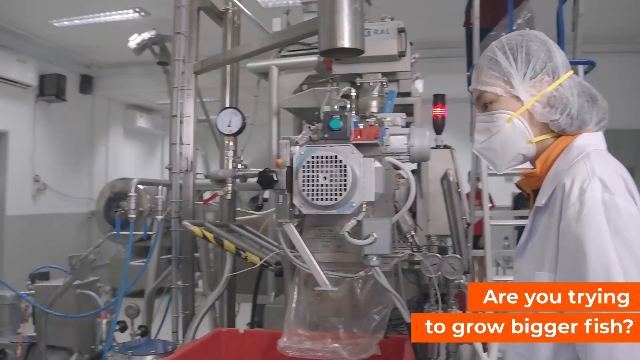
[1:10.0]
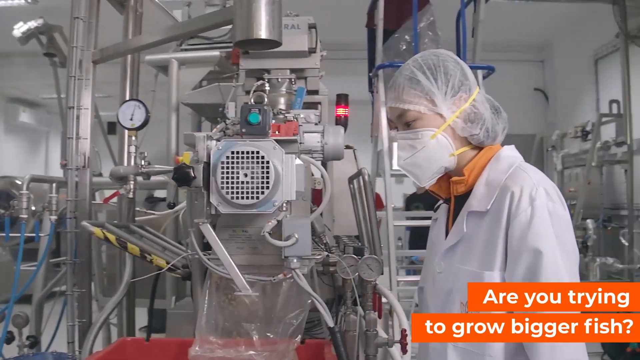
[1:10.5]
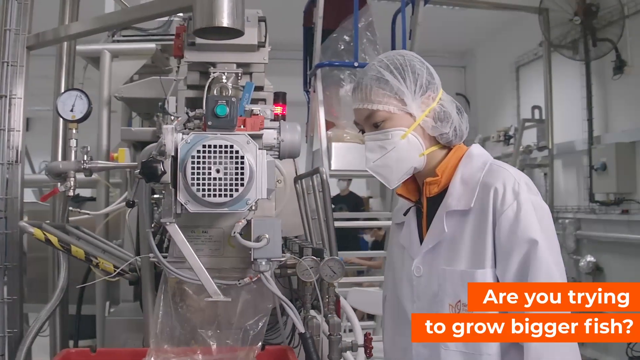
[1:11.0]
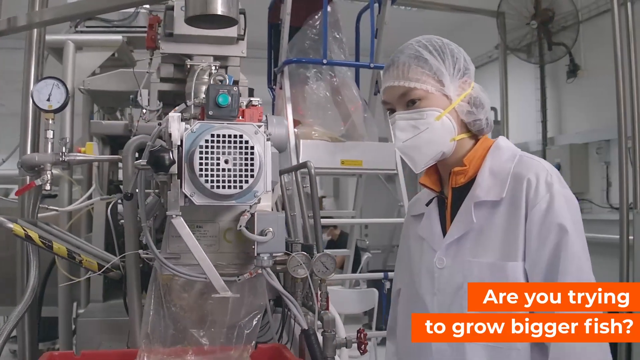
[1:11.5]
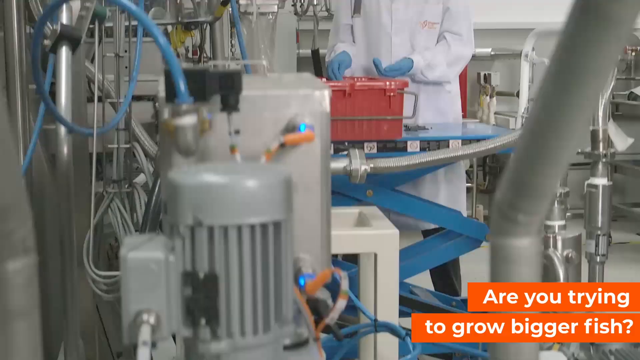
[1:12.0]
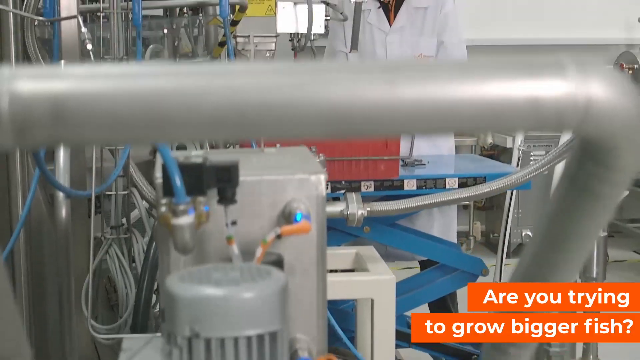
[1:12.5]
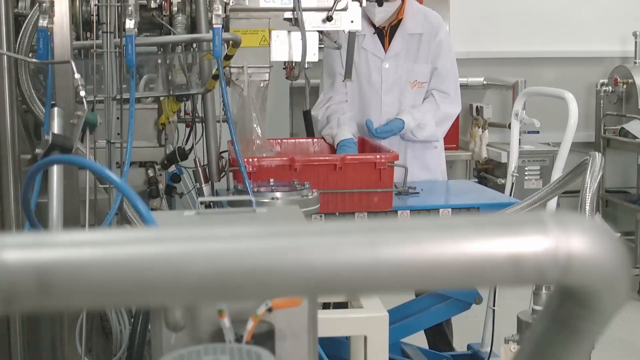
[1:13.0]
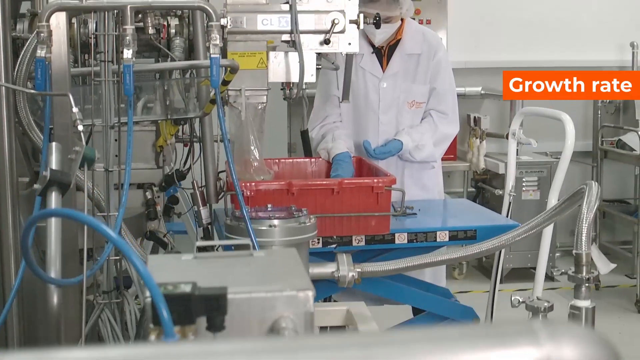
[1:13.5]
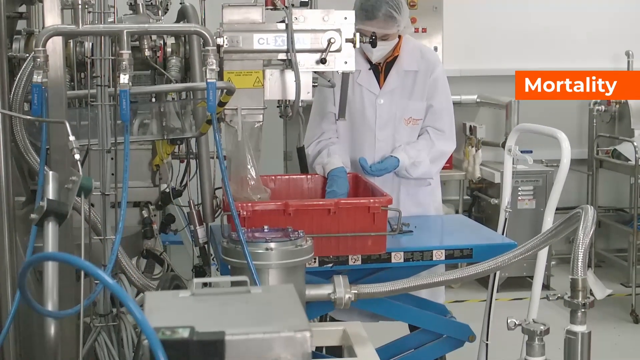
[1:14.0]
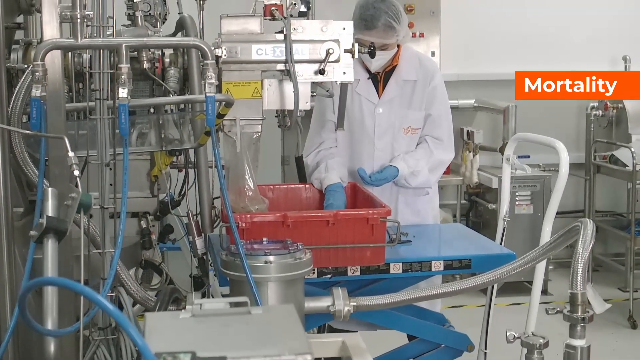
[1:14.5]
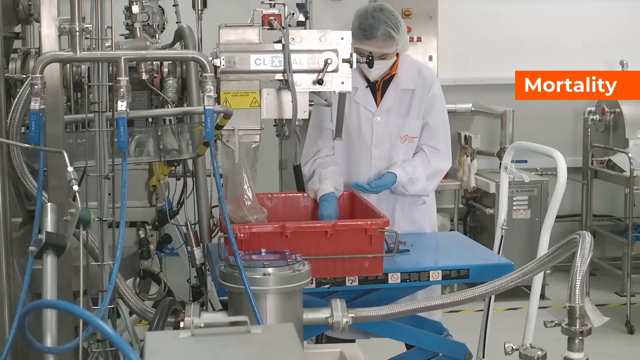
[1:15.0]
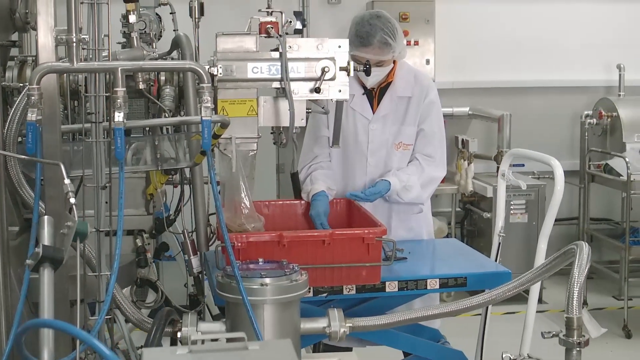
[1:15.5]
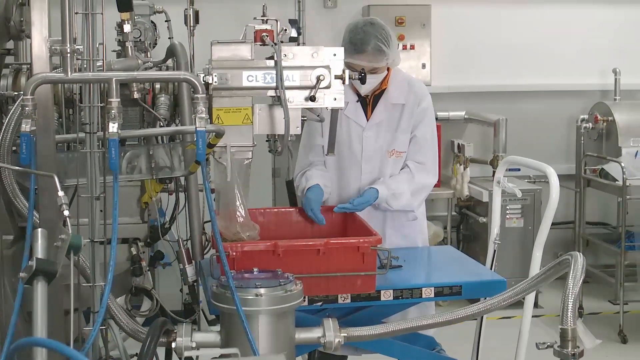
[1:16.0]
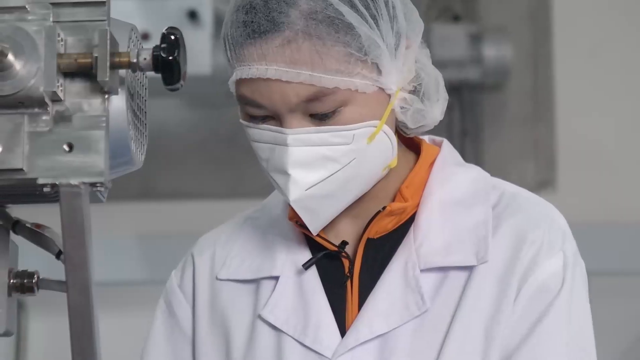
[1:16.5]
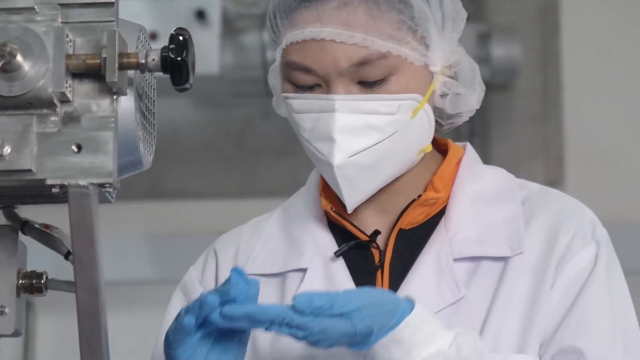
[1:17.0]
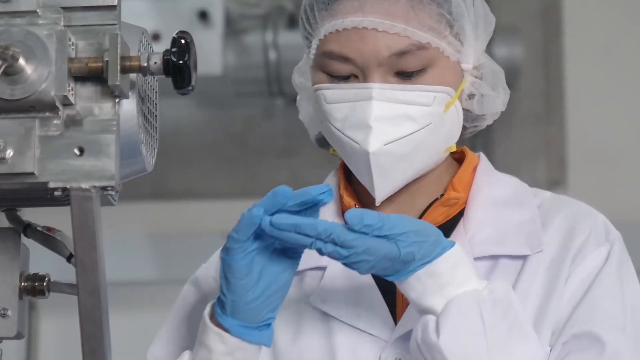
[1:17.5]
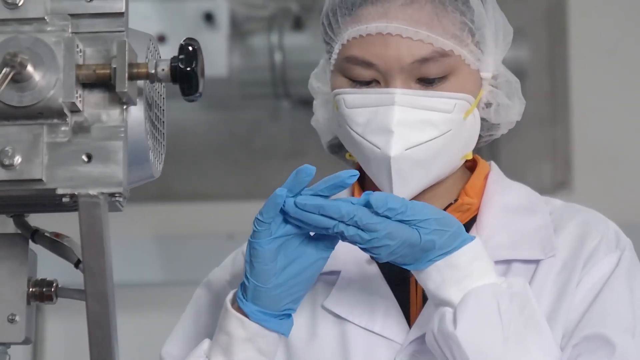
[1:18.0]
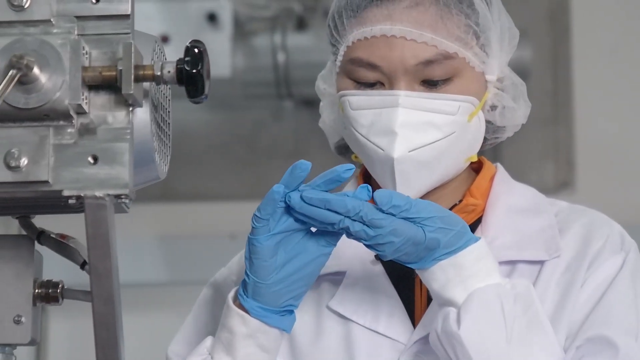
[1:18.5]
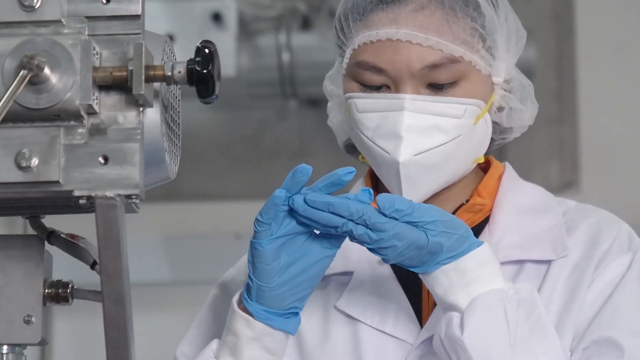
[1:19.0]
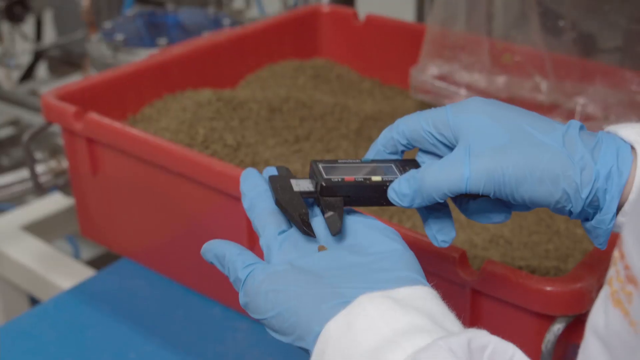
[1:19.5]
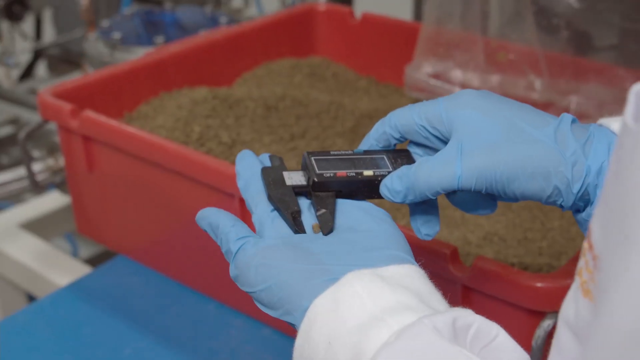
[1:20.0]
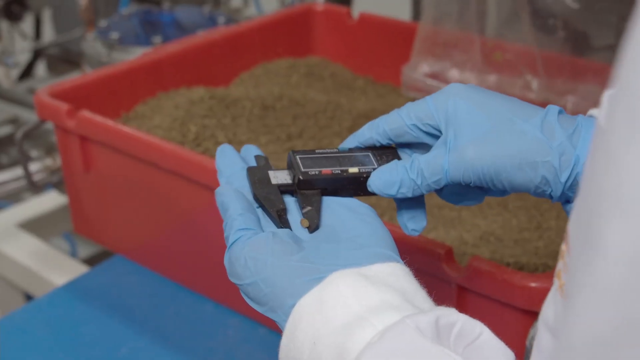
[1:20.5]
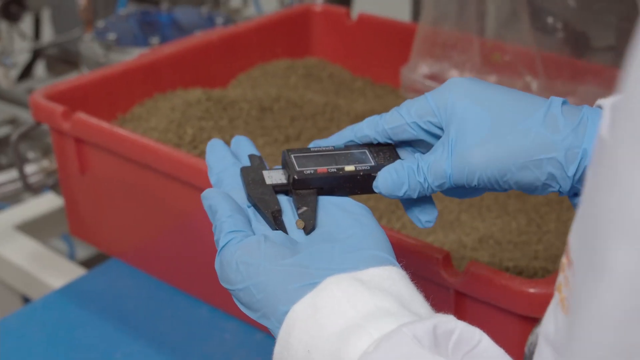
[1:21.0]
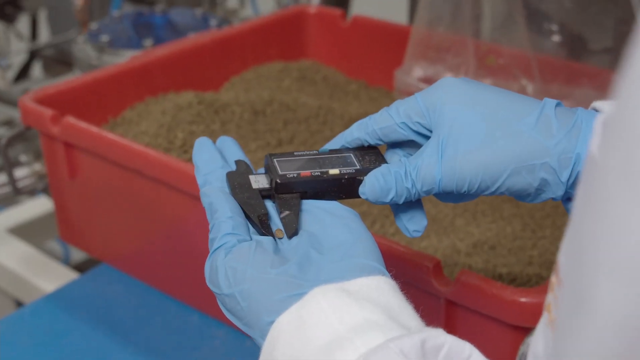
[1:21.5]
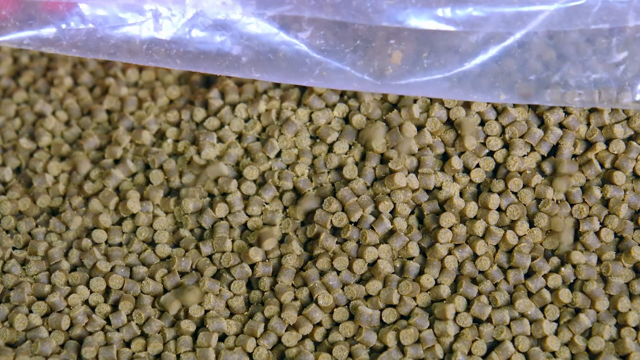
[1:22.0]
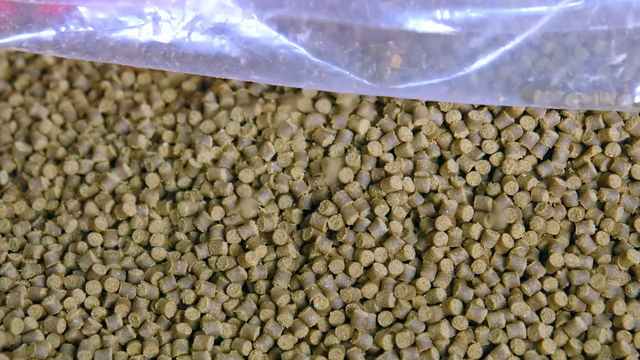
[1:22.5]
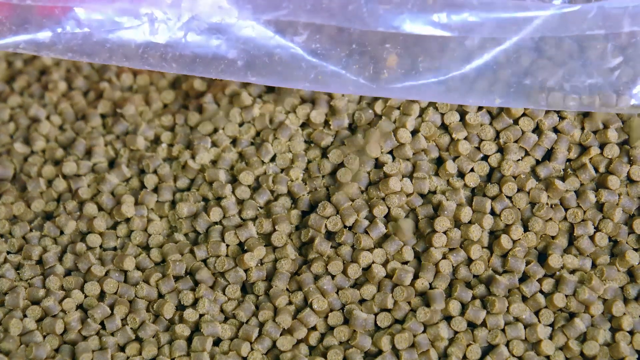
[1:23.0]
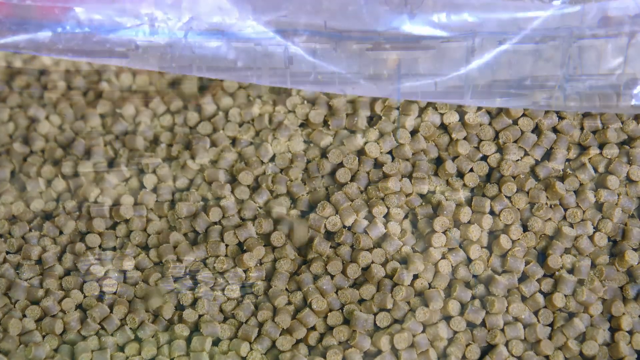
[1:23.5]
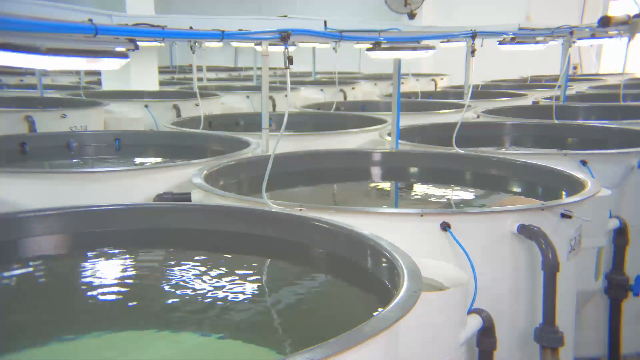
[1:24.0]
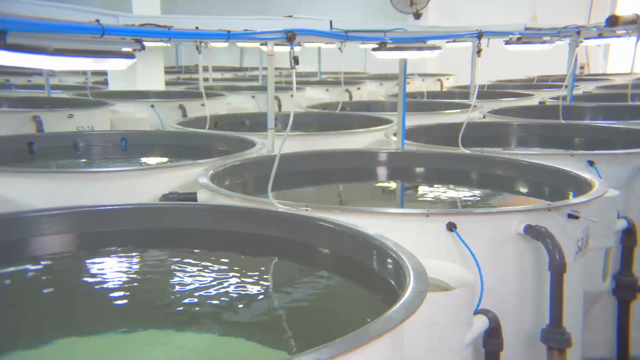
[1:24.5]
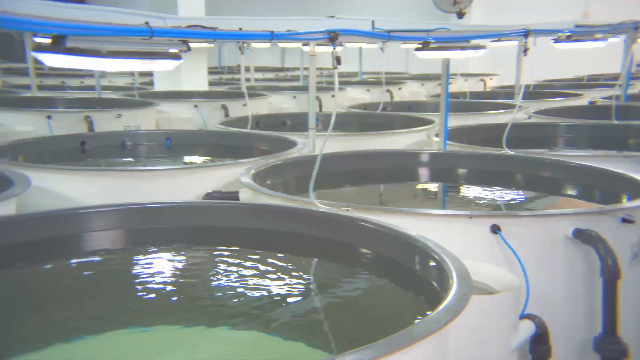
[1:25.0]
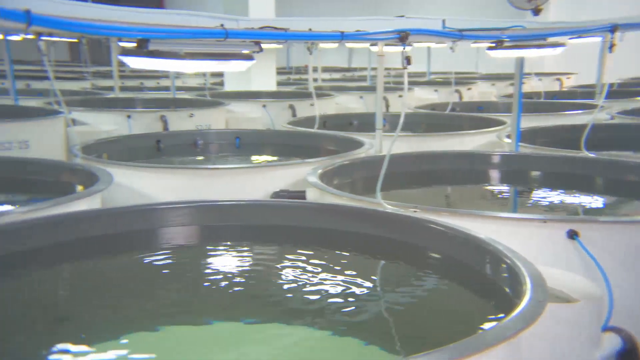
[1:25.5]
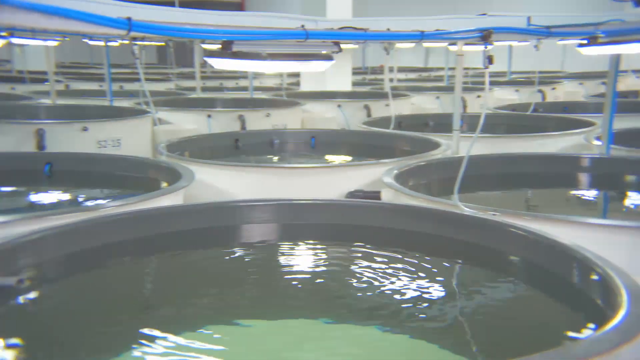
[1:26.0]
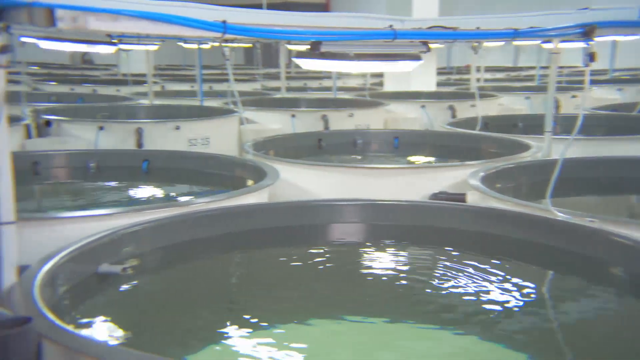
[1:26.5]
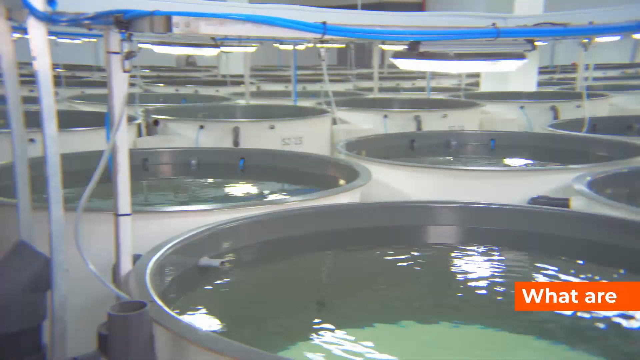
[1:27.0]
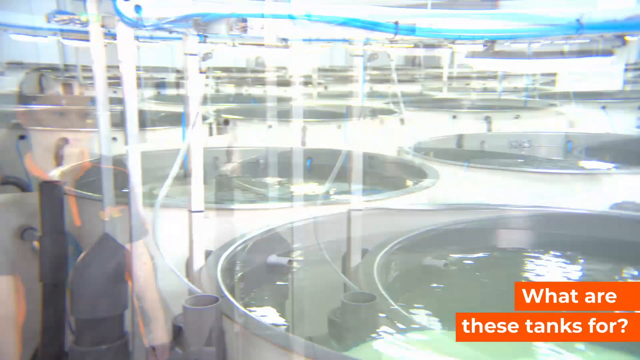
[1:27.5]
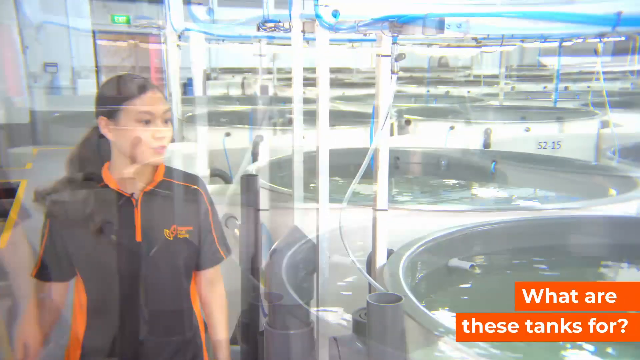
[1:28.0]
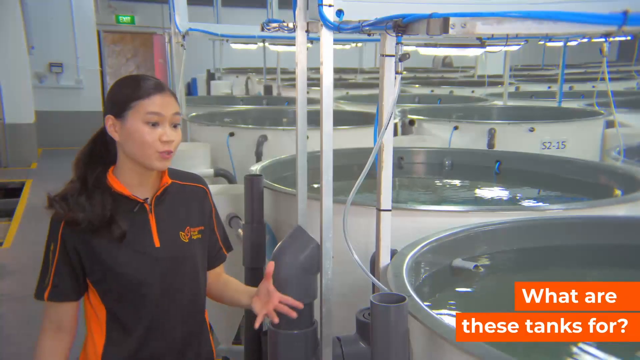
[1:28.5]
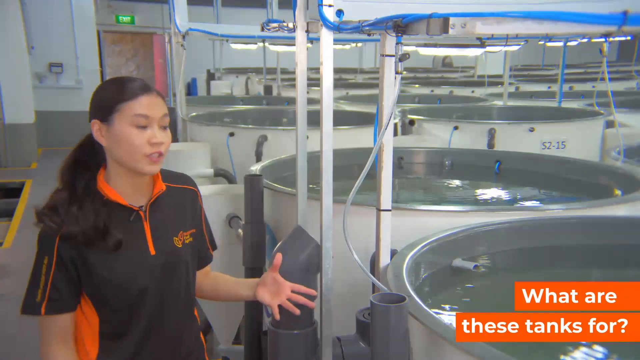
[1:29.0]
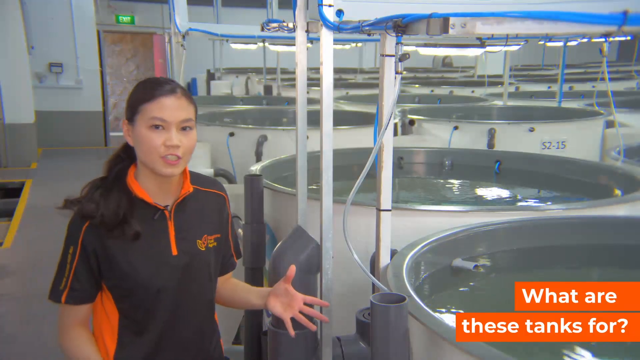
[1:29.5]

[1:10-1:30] The woman stands inside the laboratory with a covering over her hair and a safety face mask over her nose and mouth, covering the middle and bottom of her face. She wears an orange and black zipper jacket under a white button-down lab coat. In the lower right of the frame, the words "Are you trying to grow bigger fish?" appear in white on an orange background. There are lots of machines in the laboratory. Wearing blue nitrile gloves, she has her hands inside a red bin and appears to be examining samples of fish food, moving the food around in her palms and inspecting it closely. She then uses some equipment to measure the size of the fish food, which appears uniform in color and size. Next, she walks out, having taken off her lab coat and other protective gear, and stands next to some large containers of what appears to be a clear liquid.